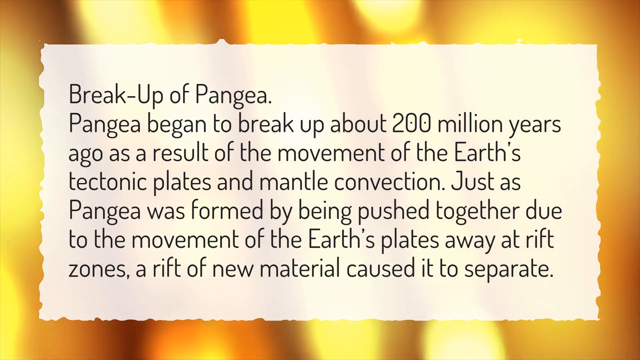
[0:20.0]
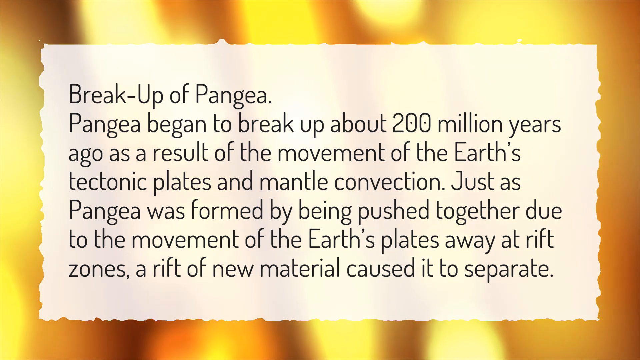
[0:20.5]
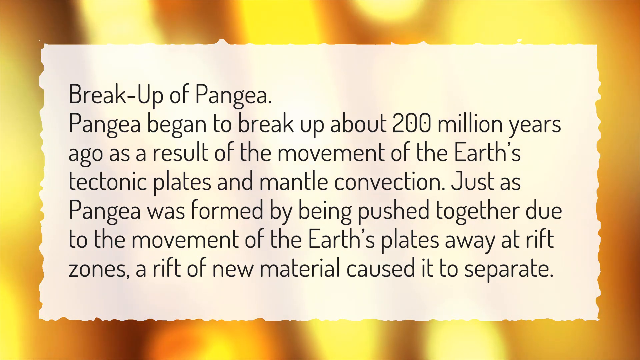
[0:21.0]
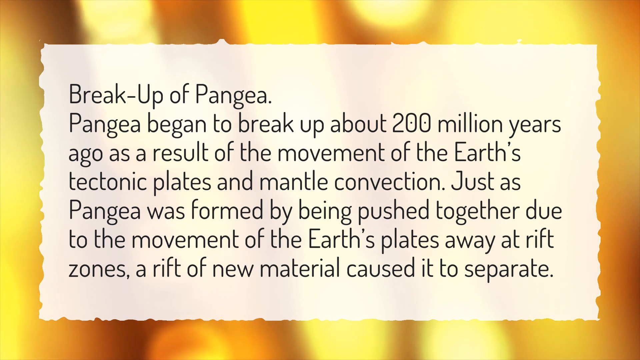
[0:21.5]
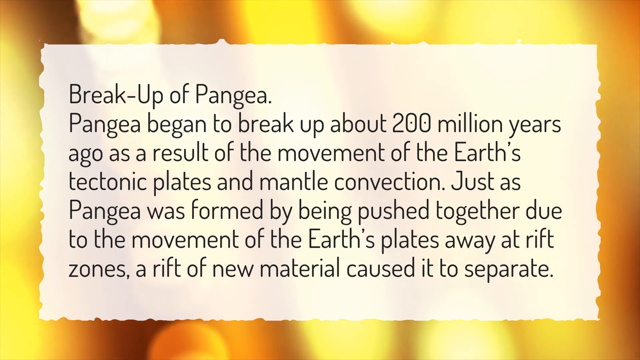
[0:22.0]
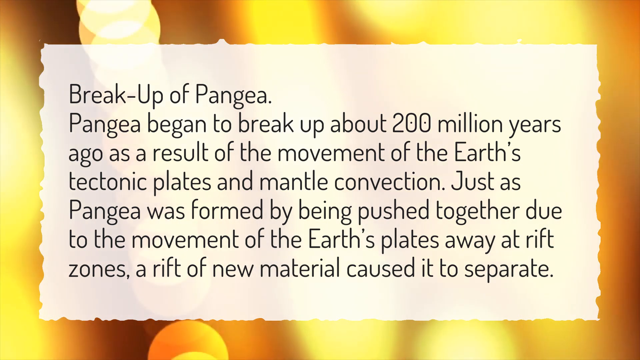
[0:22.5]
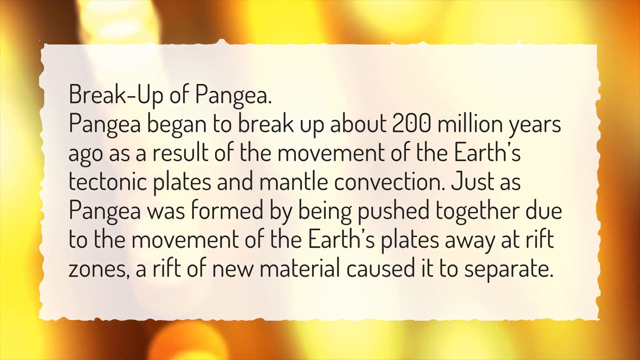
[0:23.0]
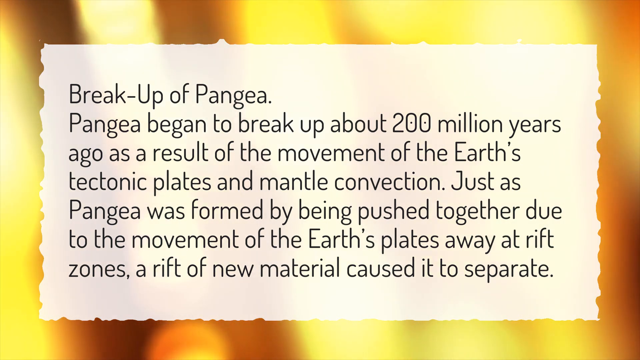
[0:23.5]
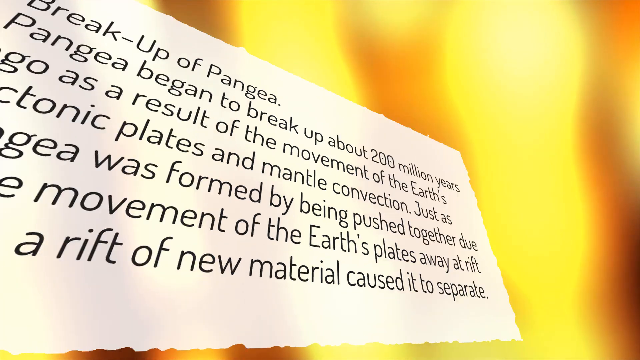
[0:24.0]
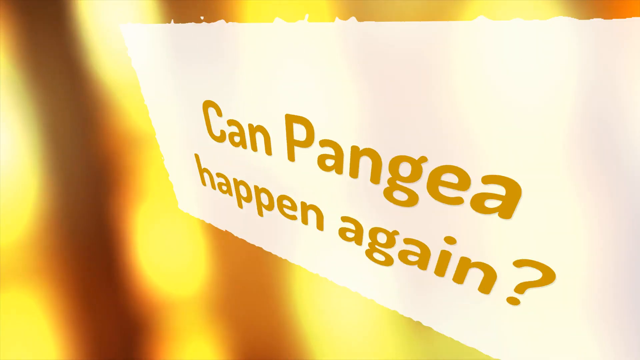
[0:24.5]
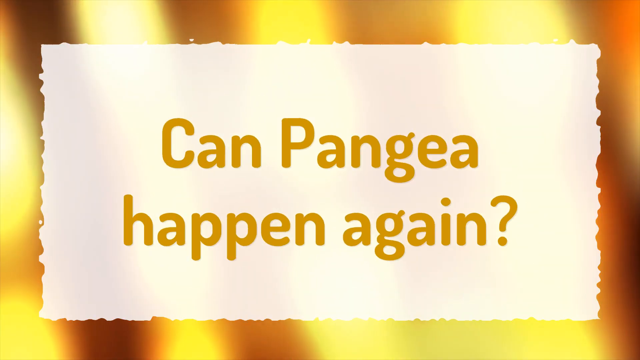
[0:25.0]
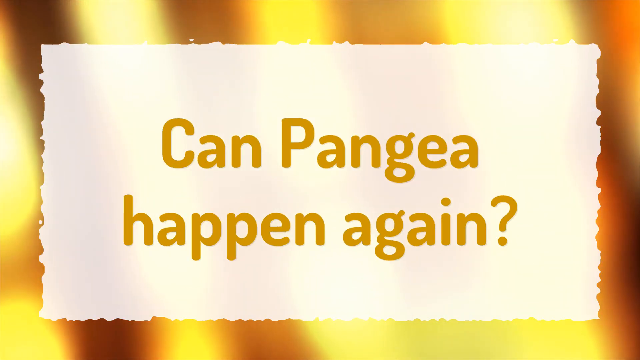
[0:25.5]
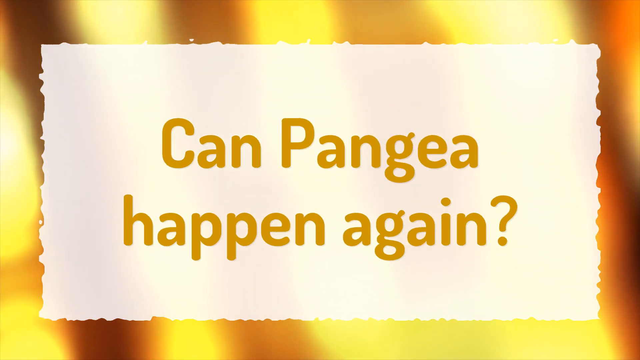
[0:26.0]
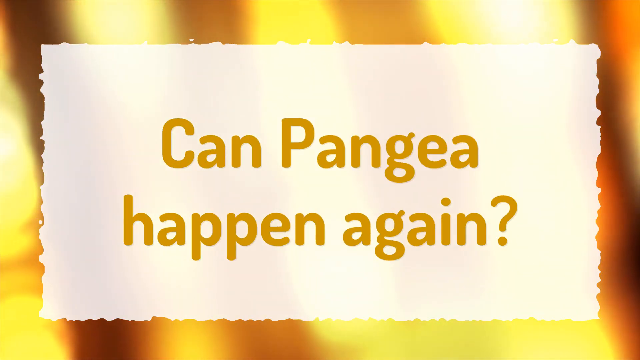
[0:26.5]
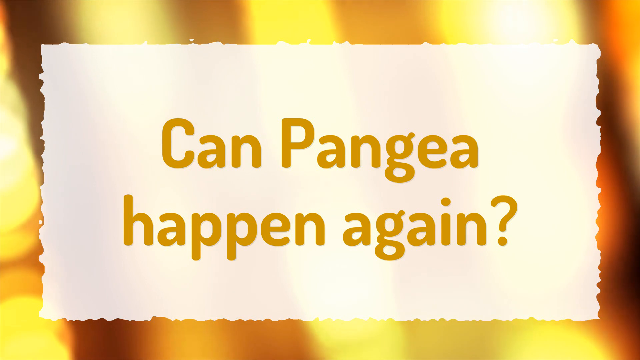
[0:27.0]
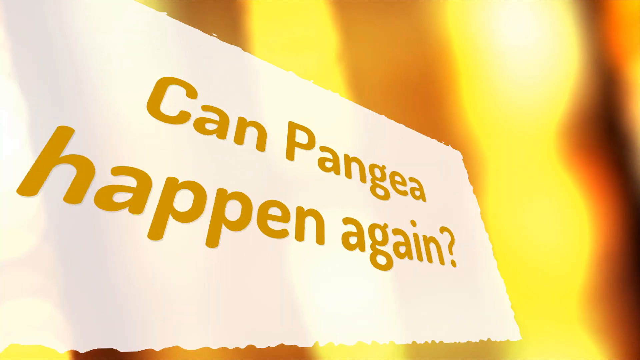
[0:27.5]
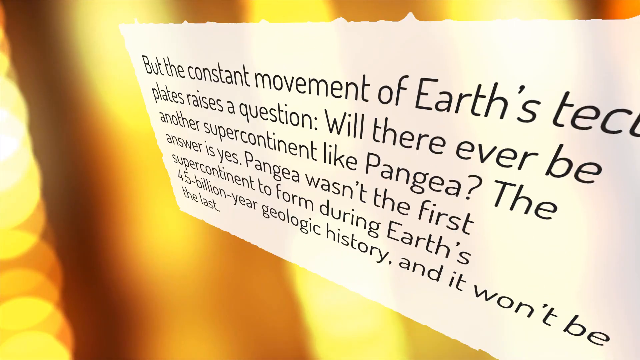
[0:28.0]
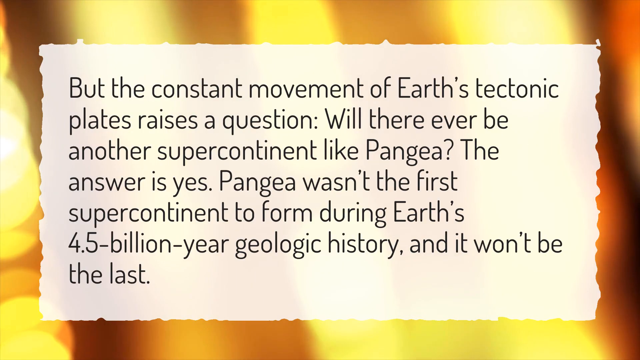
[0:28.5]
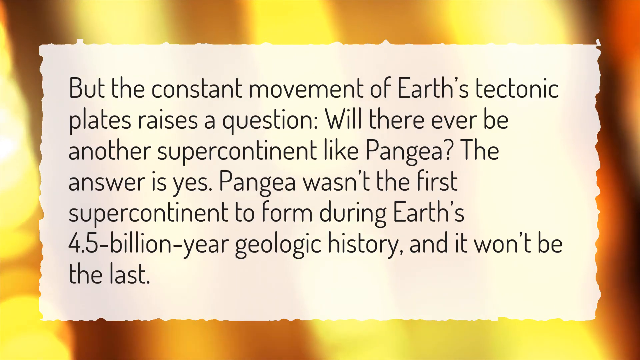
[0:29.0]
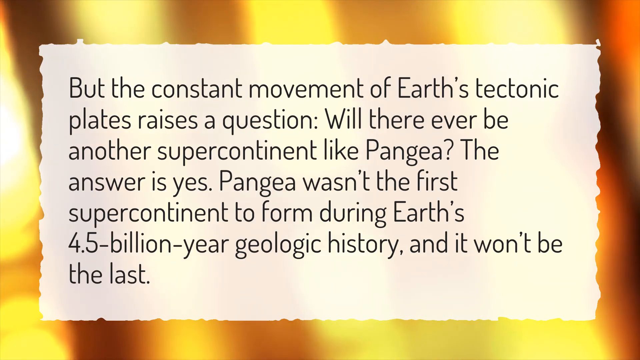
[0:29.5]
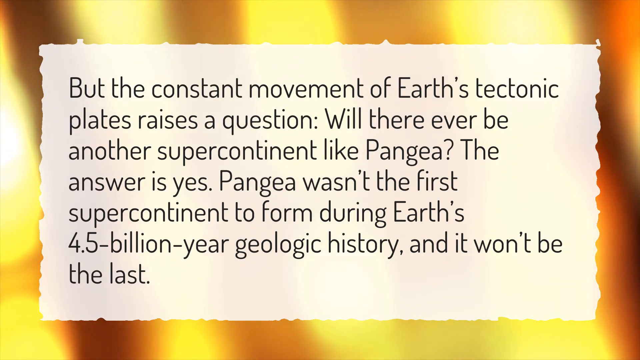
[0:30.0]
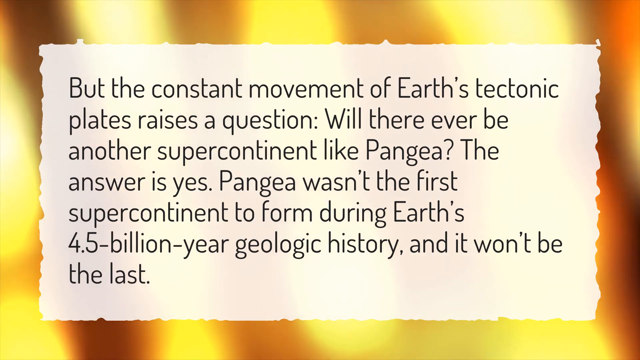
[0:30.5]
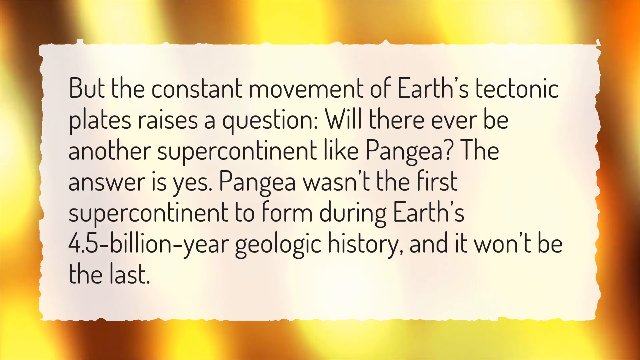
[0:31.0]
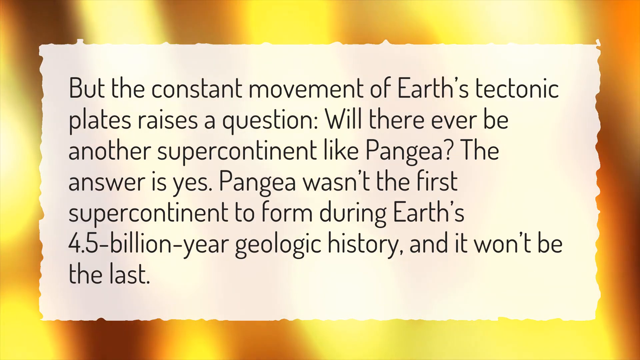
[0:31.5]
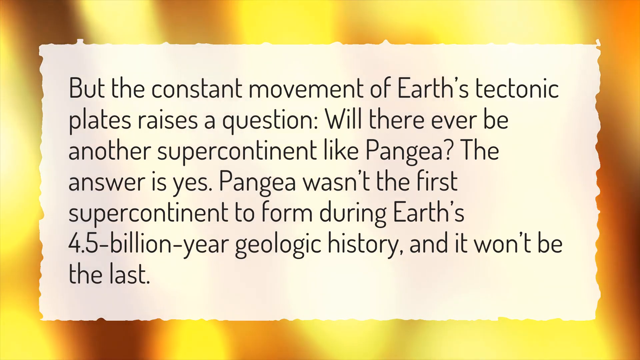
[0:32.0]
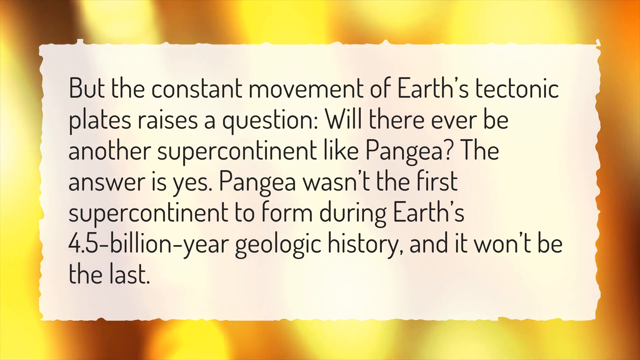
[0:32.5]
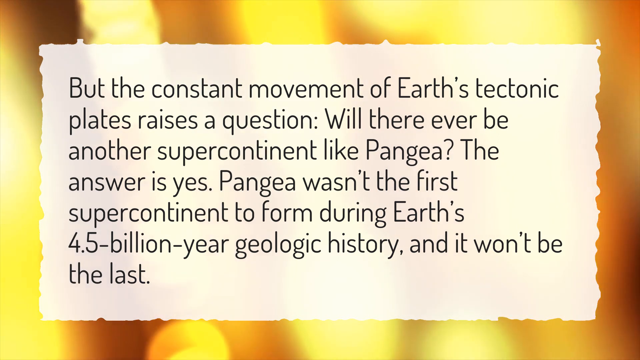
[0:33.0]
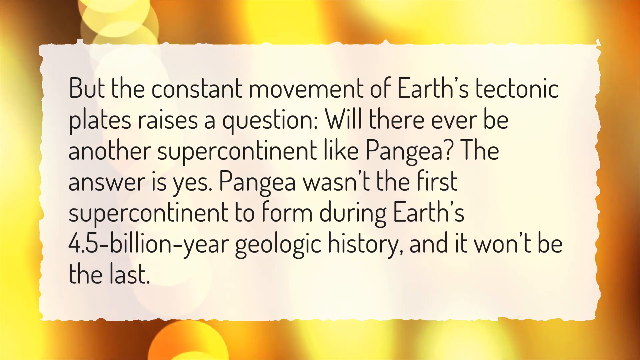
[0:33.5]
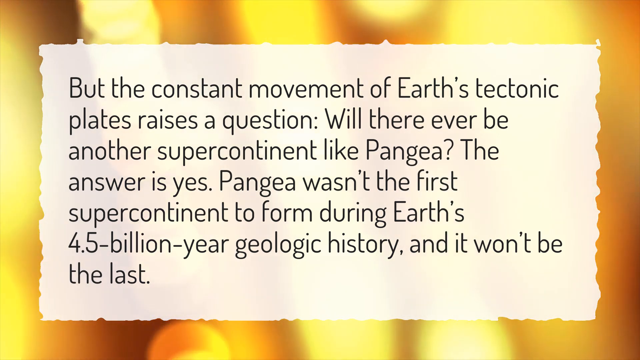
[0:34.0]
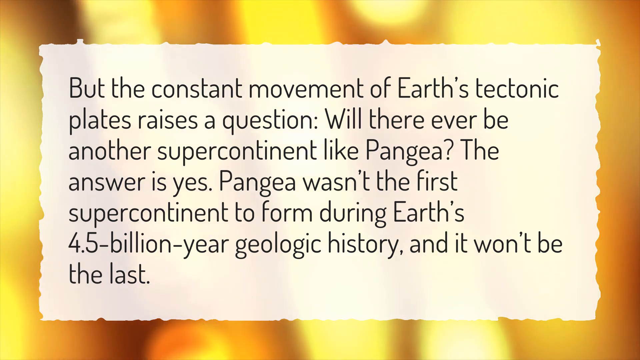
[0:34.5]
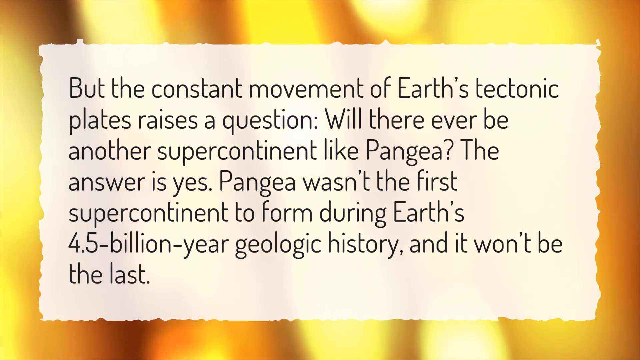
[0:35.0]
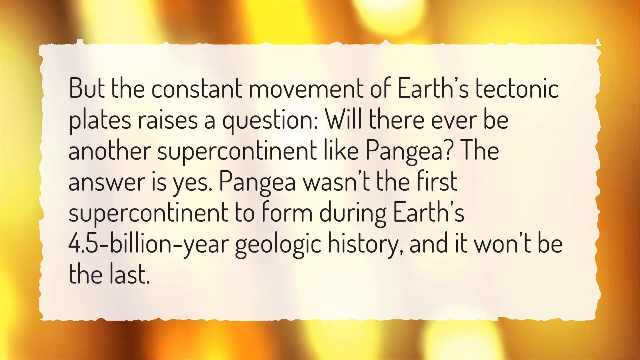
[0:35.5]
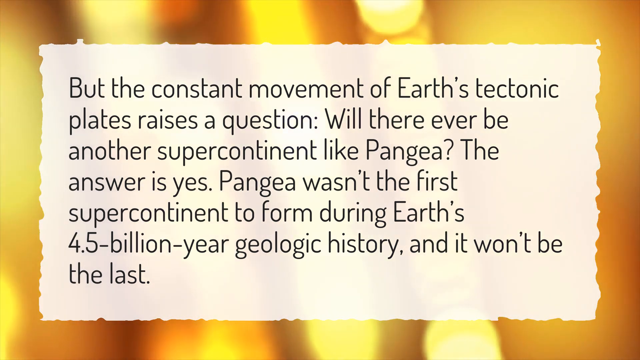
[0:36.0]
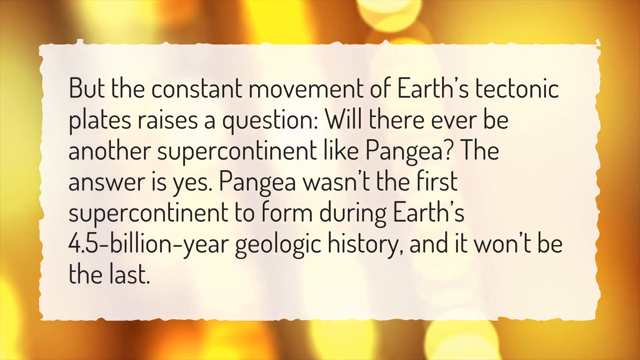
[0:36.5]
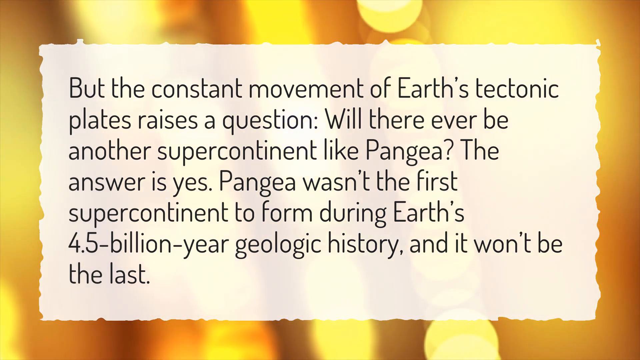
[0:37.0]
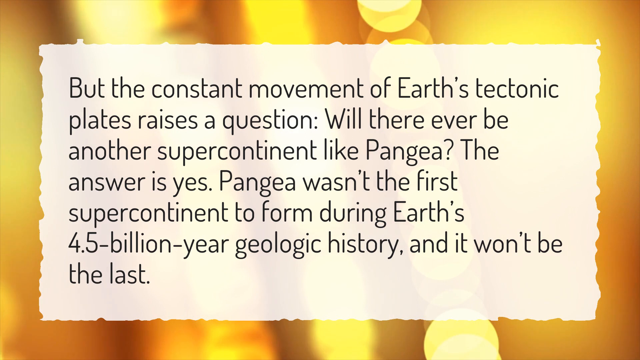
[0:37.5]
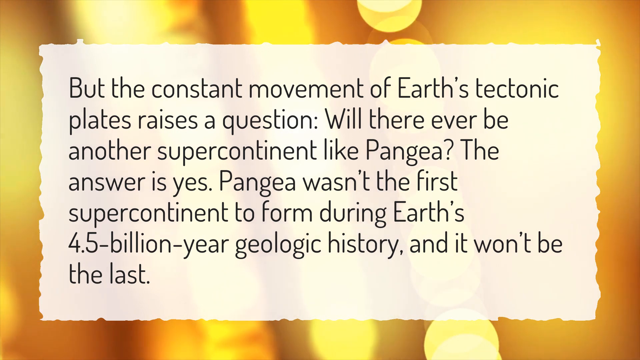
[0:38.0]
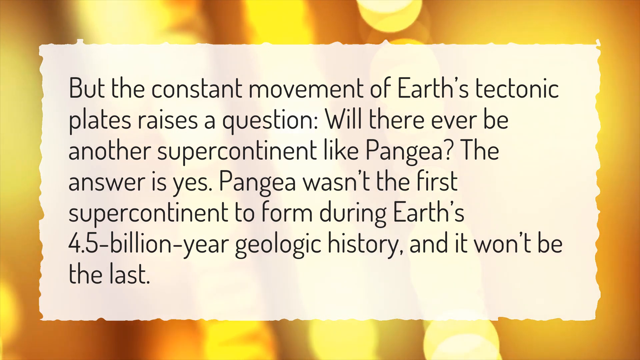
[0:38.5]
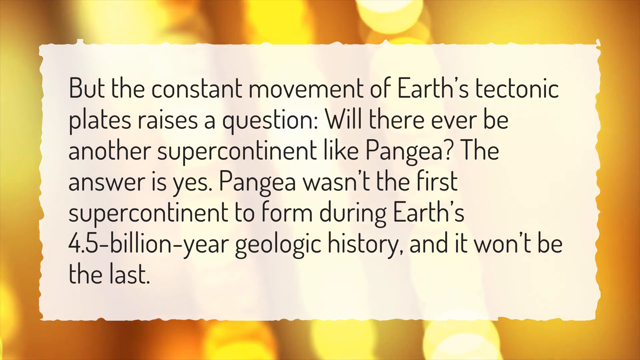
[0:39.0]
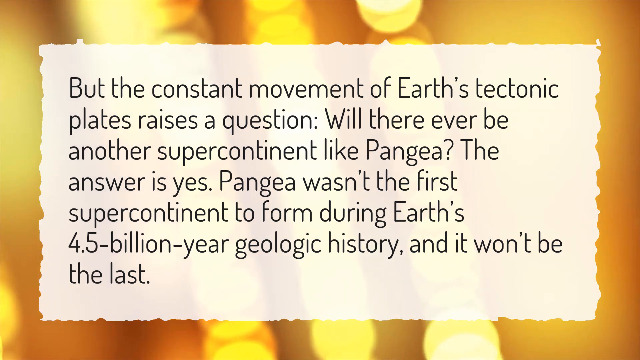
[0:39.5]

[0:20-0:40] Presentation-style text on the screen reads: "Break up of Pangaea. Pangaea began to break up about 200 million years ago as a result of the movement of the Earth's tectonic plates and mantle convection. Just as Pangaea was formed by being pushed together due to the movement of the Earth's away at rift zones, a rift of new material caused it to separate." A flip-style transition leads to a slide headed "Can Pangea happen again?", followed by text that reads: "The constant movement of Earth's tectonic plates raises a question. Will there ever be another supercontinent like Pangaea? The answer is yes. Pangaea wasn't the first supercontinent to form during Earth's 4.5 billion year geologic history, and it won't be the last." The background looks like a white, torn piece of parchment paper, and just beyond it the border is black, yellow and orange.